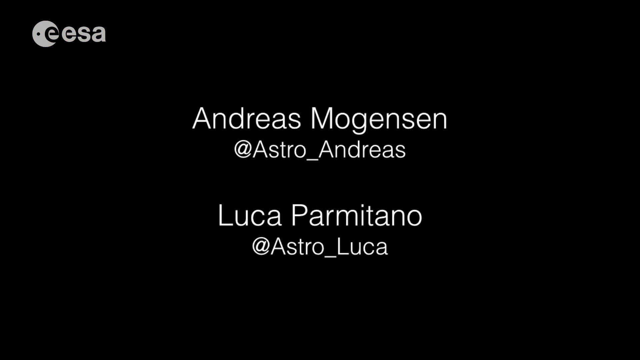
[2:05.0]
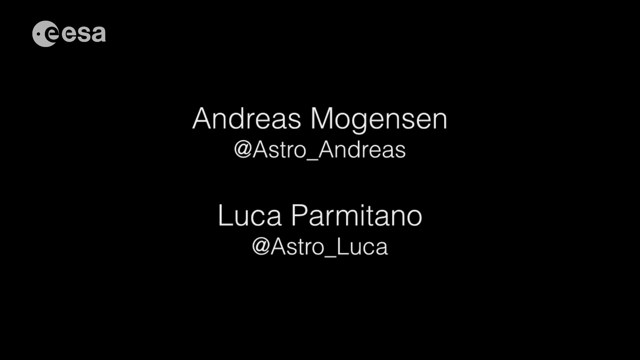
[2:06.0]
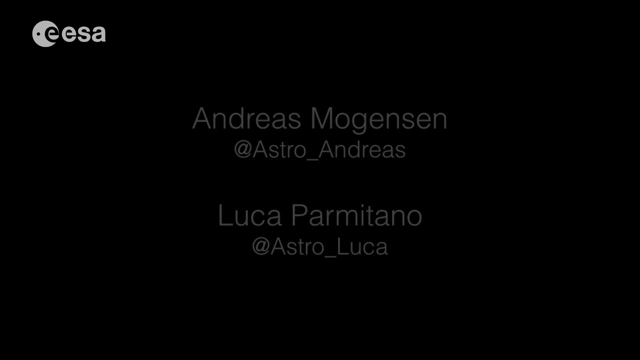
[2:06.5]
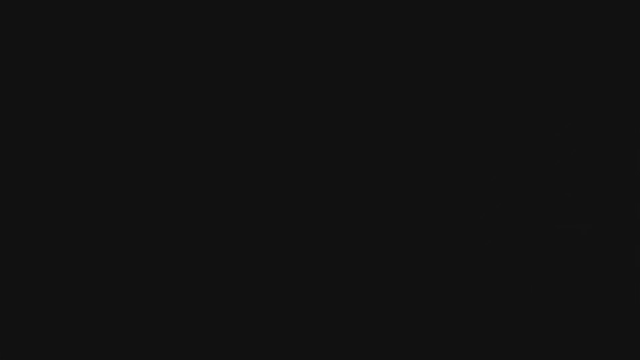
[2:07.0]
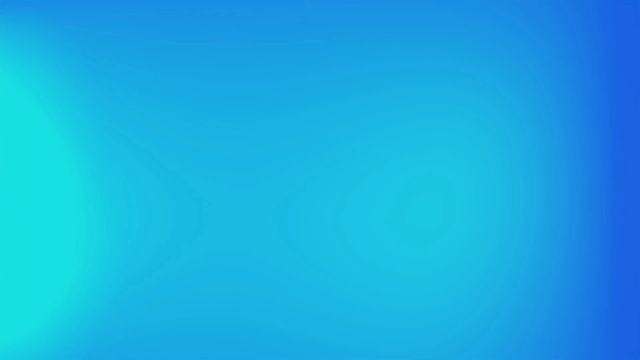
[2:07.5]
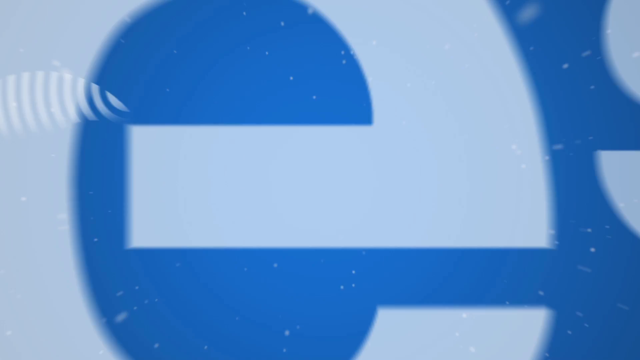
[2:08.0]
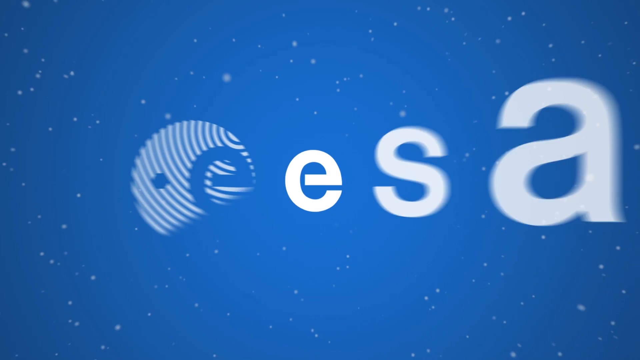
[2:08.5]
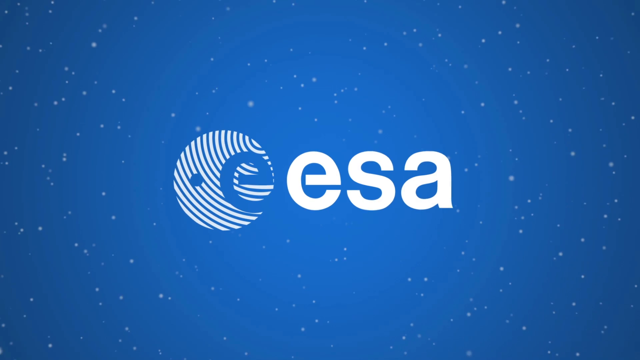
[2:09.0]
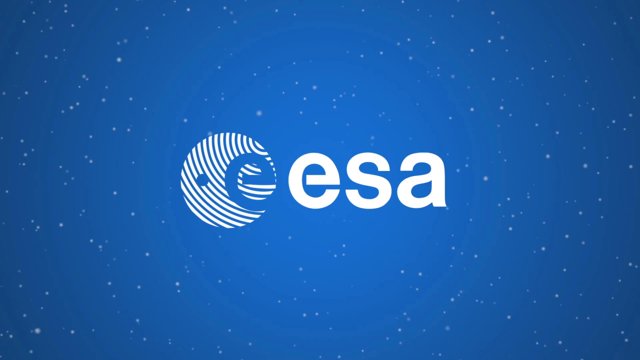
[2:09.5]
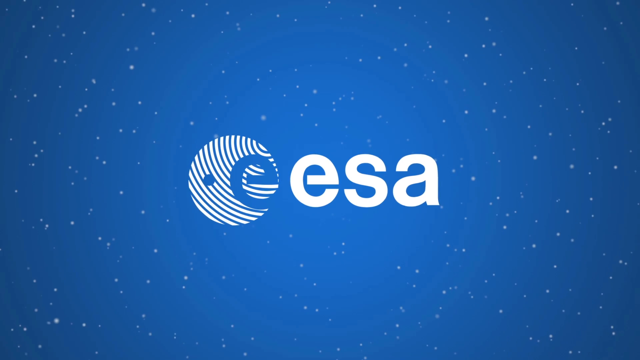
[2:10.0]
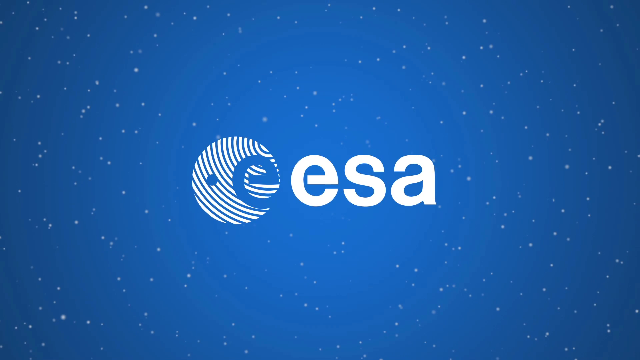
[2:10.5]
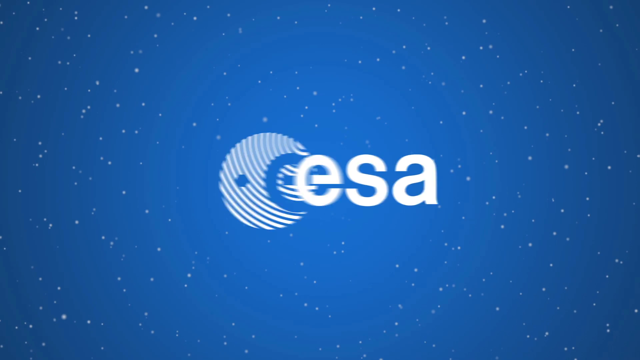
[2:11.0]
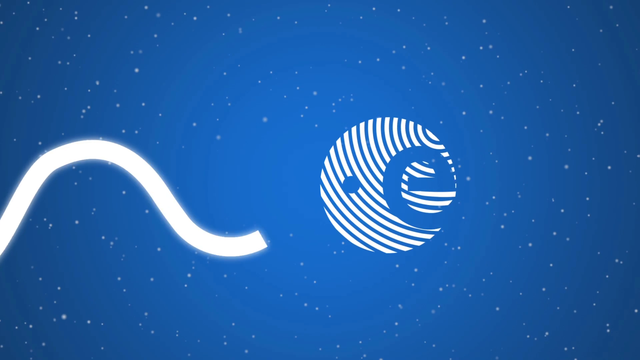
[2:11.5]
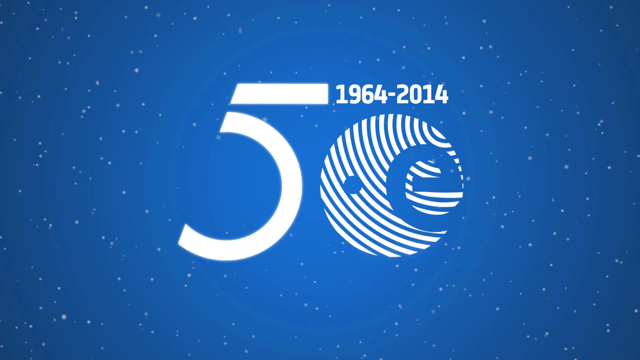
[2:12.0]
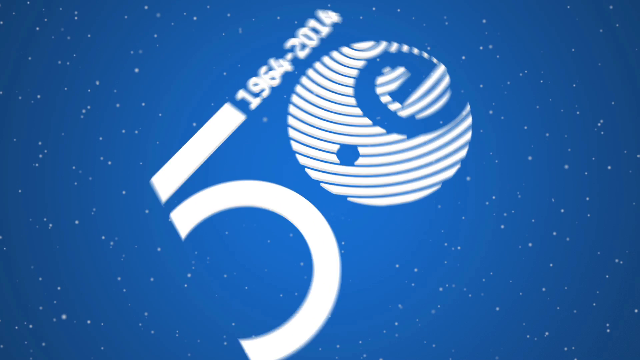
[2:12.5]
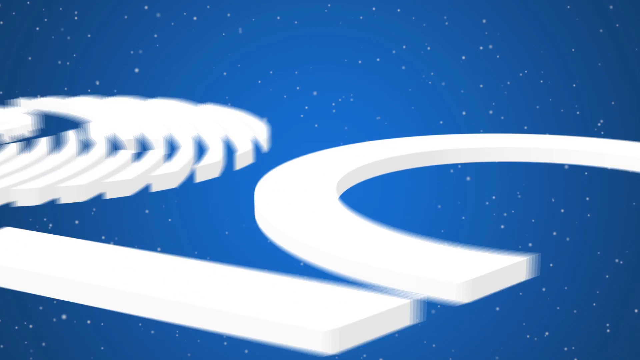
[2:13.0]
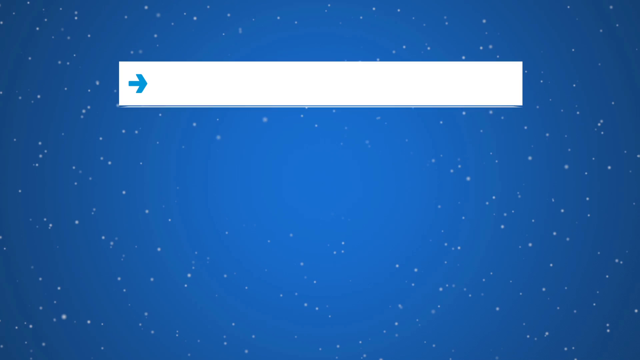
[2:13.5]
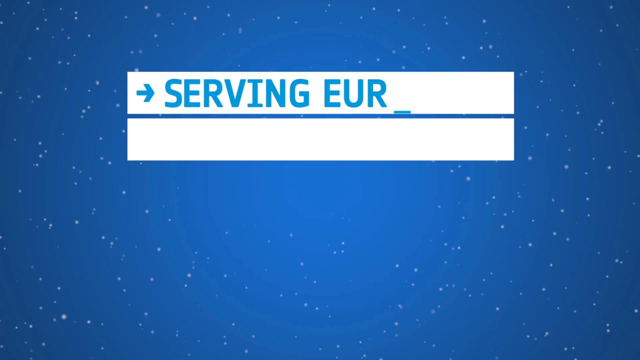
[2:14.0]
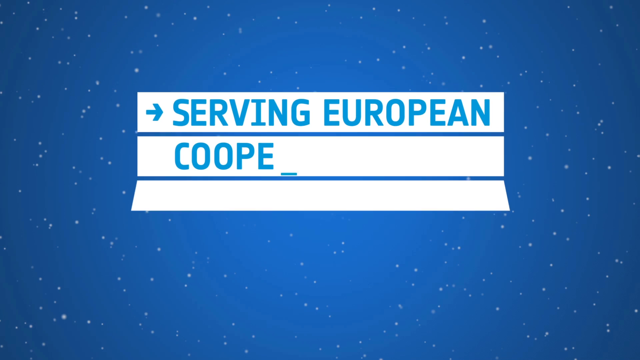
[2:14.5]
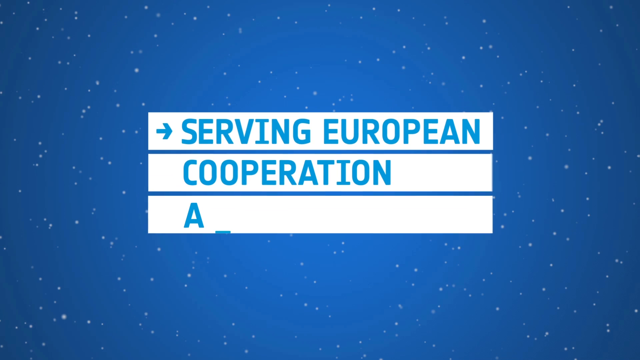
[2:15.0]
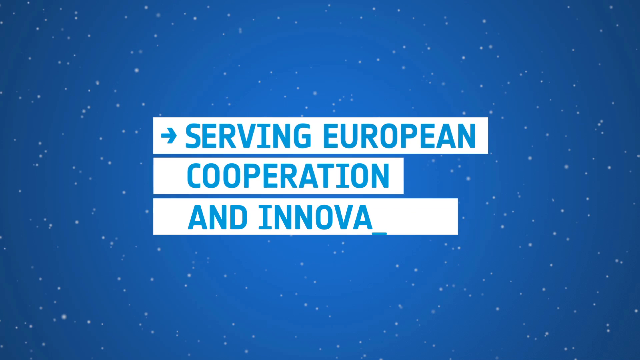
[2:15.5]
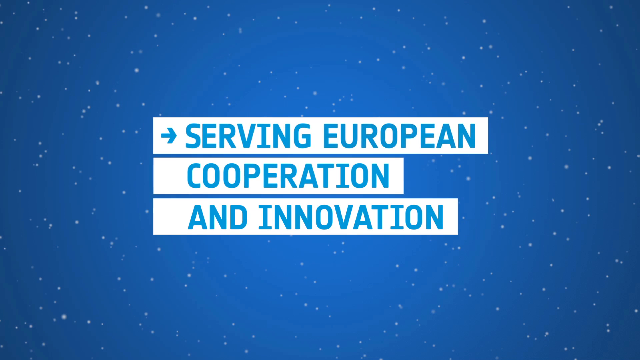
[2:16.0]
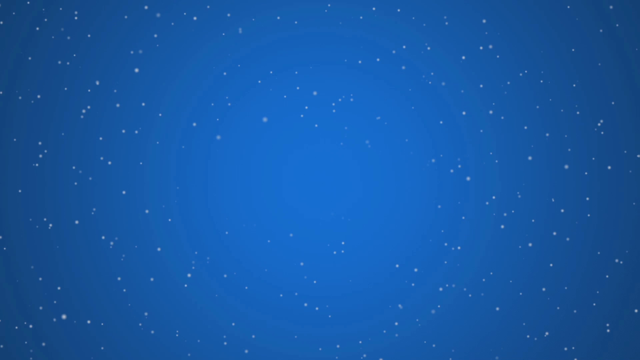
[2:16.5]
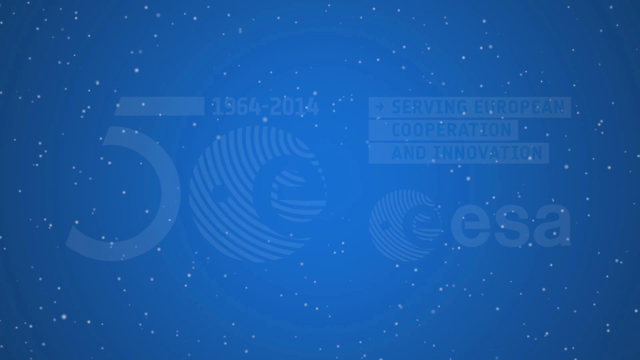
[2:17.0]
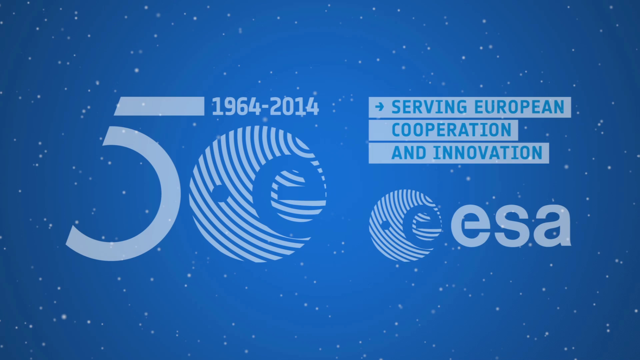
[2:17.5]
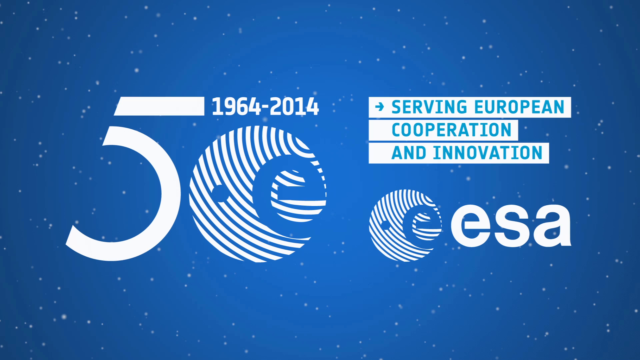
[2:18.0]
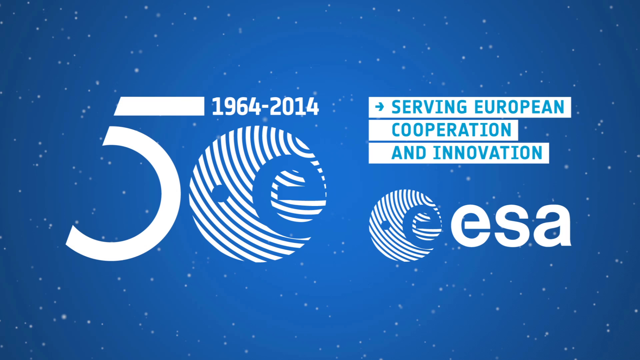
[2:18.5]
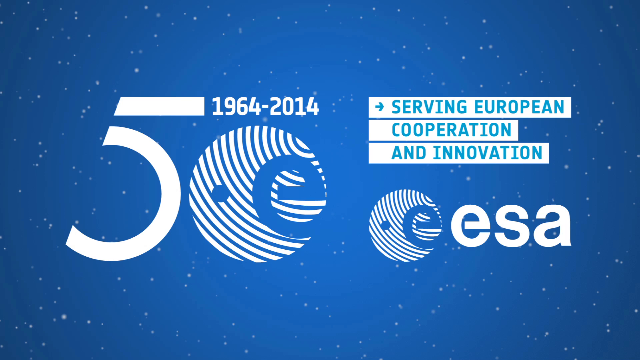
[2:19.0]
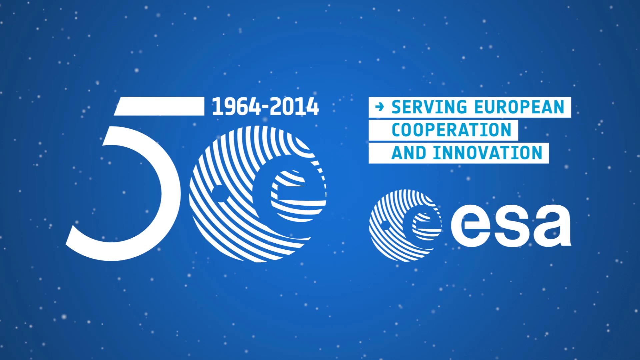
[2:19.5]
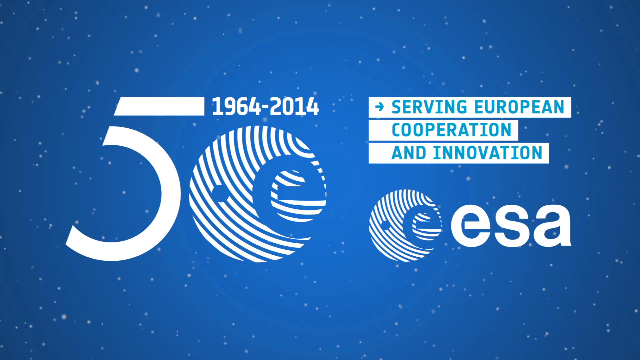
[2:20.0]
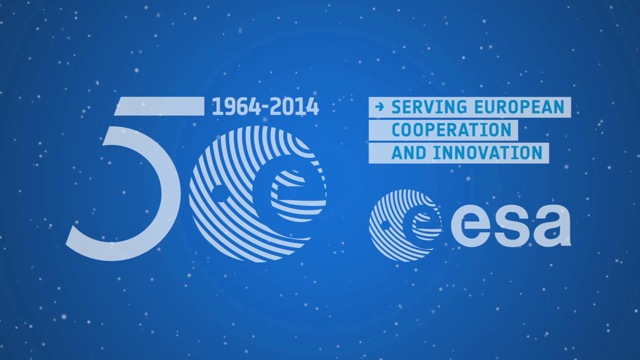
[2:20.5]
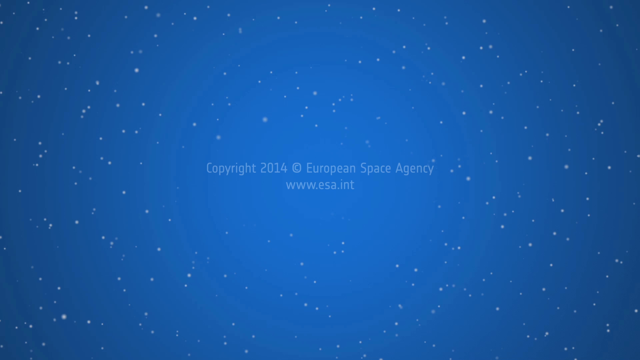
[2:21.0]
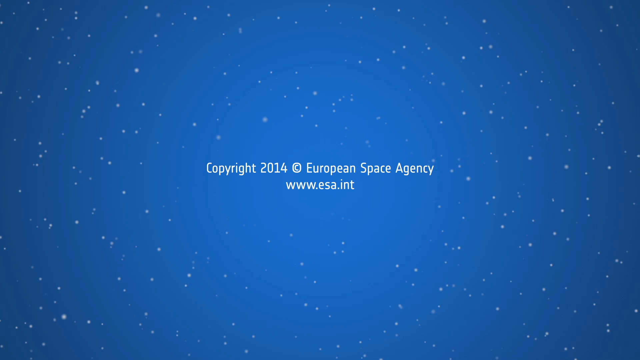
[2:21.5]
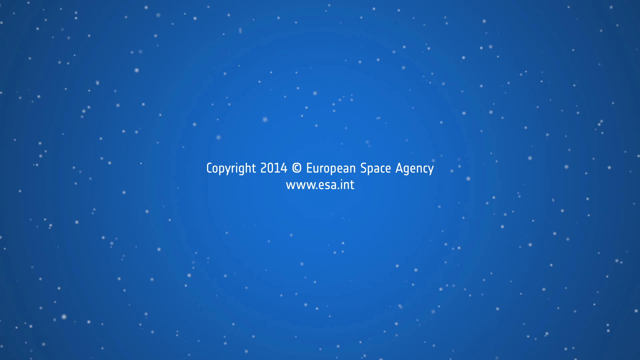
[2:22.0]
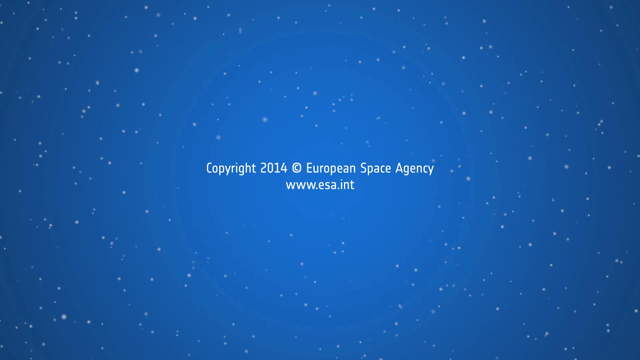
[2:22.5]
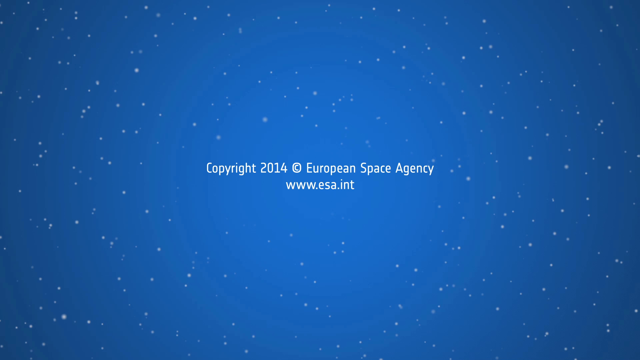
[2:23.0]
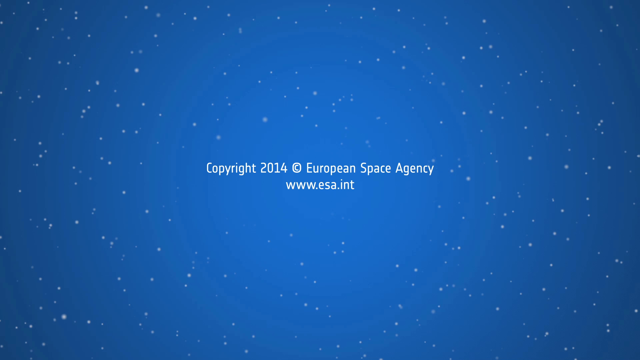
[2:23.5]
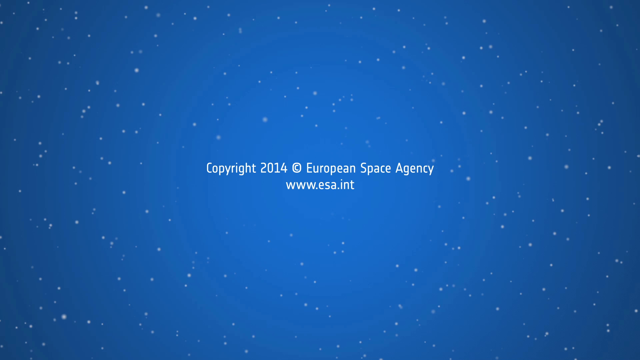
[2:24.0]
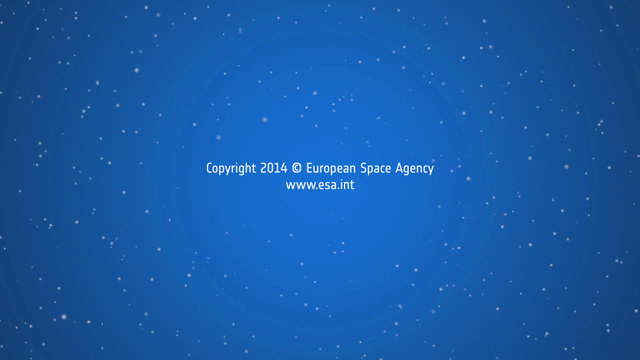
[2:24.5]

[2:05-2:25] The two names "Andreas Mogensen @ Astro_Andreas" and "Luca Parmitano @ Astro_Luca" are shown. Then the video cuts to the blue background with the EESA logo. The first E is in a white circle and turns into a 50. Text reads "Serving European cooperation and innovation", "1964-2014", "Copyright 2014 European Space Agency" and "www.esa.int". The people and the lab are not shown again.